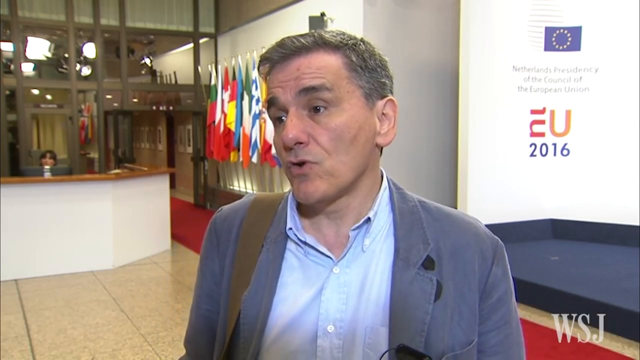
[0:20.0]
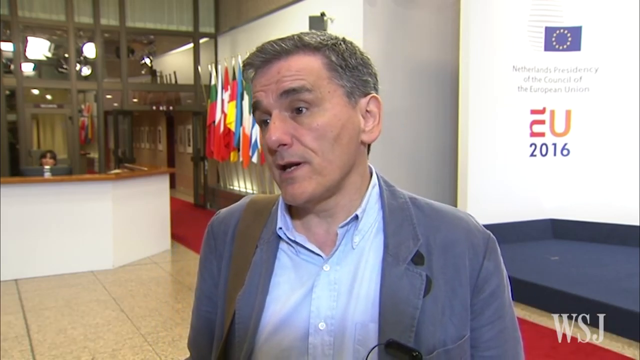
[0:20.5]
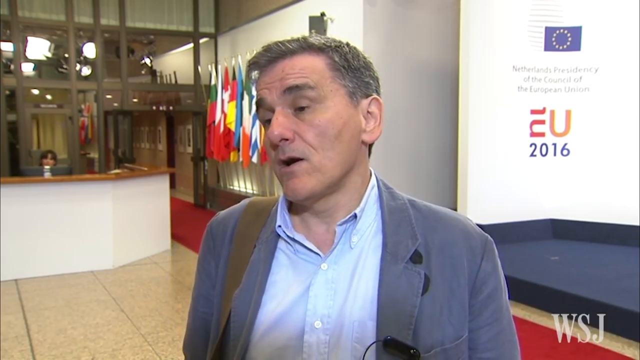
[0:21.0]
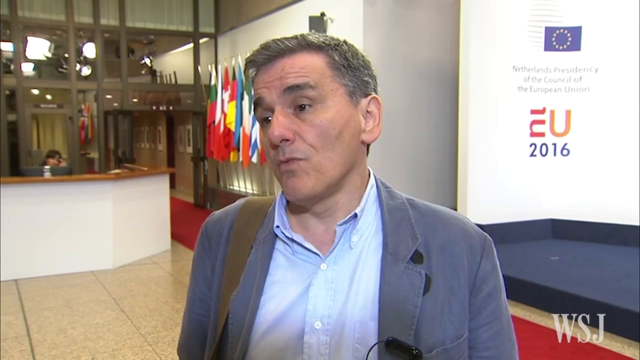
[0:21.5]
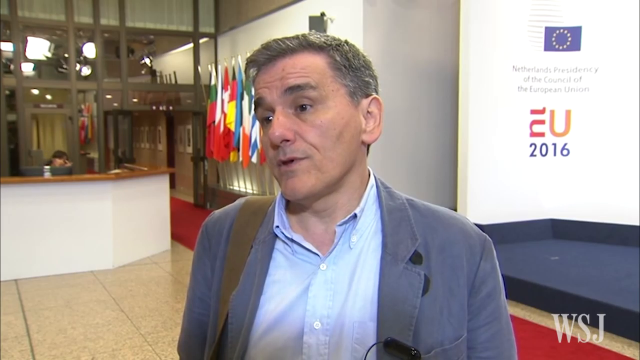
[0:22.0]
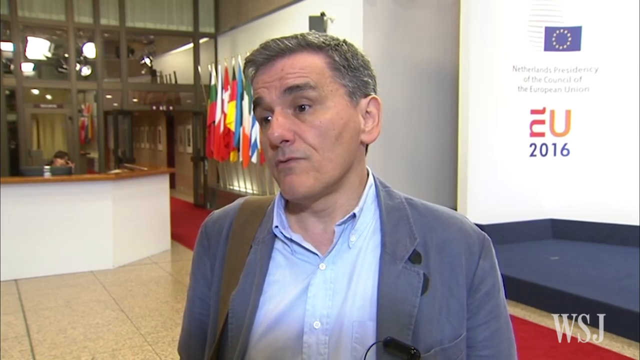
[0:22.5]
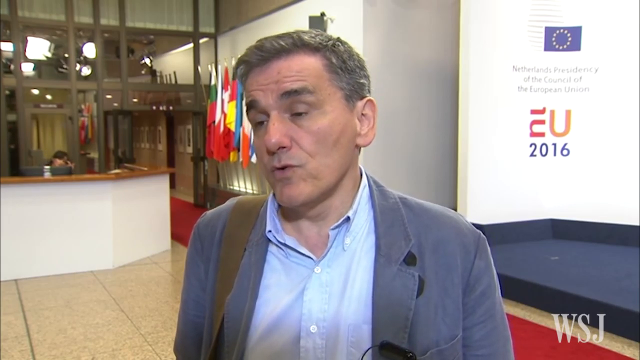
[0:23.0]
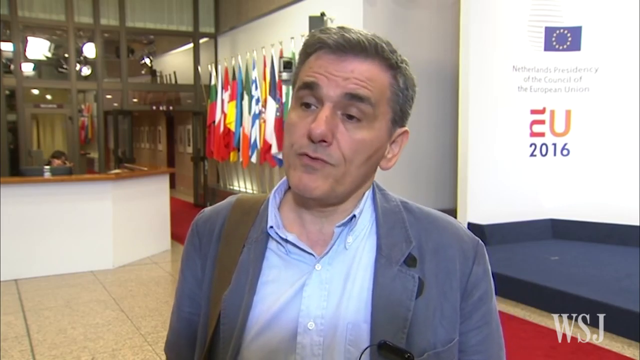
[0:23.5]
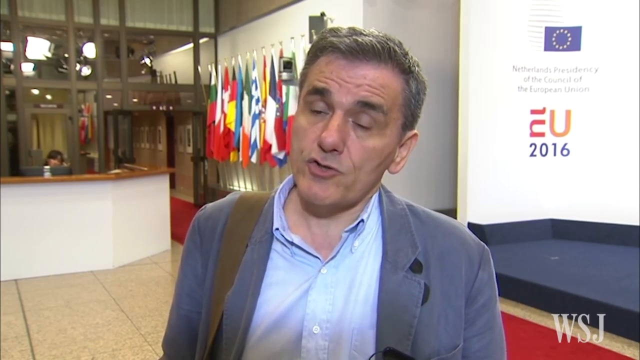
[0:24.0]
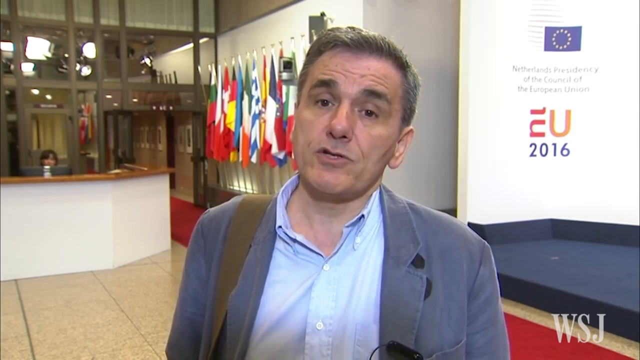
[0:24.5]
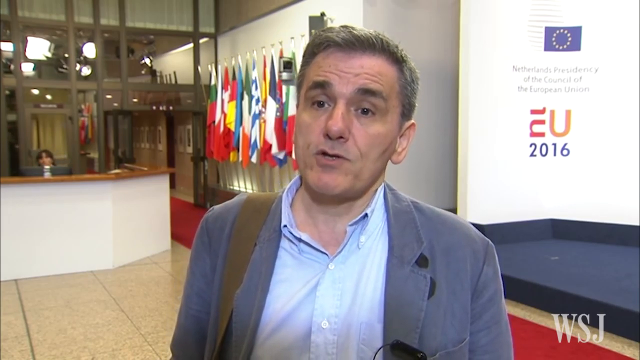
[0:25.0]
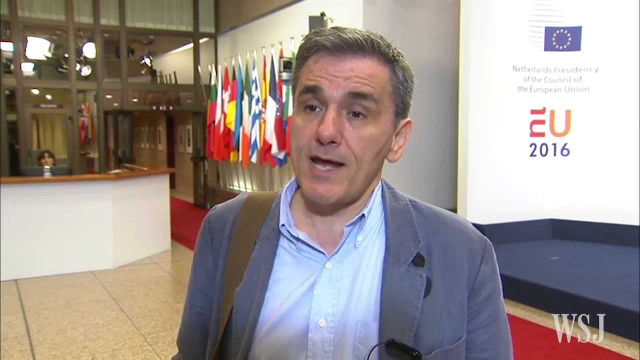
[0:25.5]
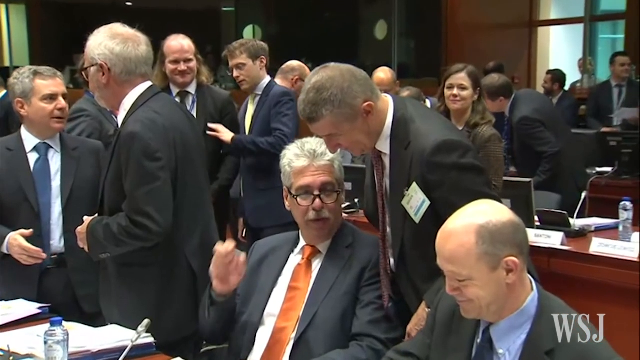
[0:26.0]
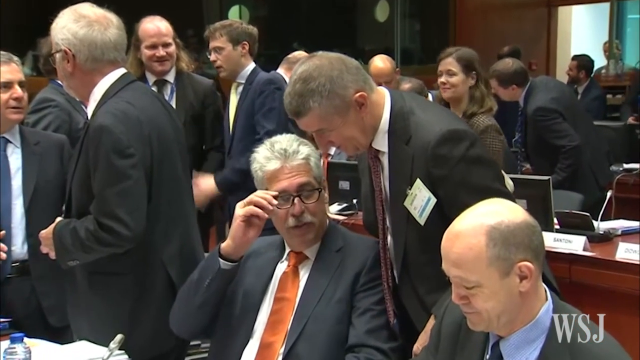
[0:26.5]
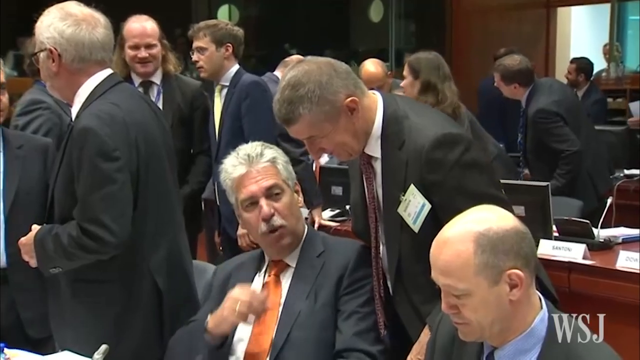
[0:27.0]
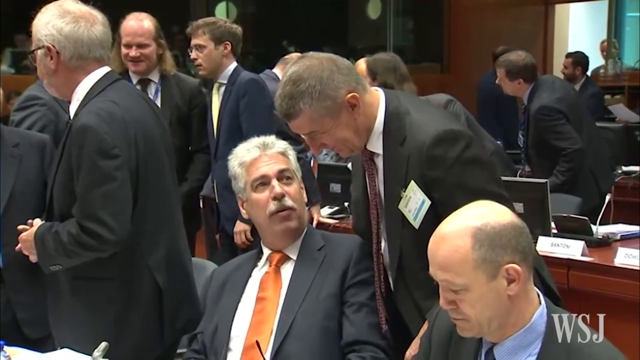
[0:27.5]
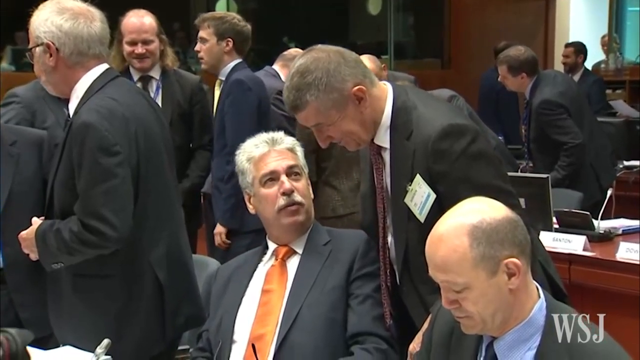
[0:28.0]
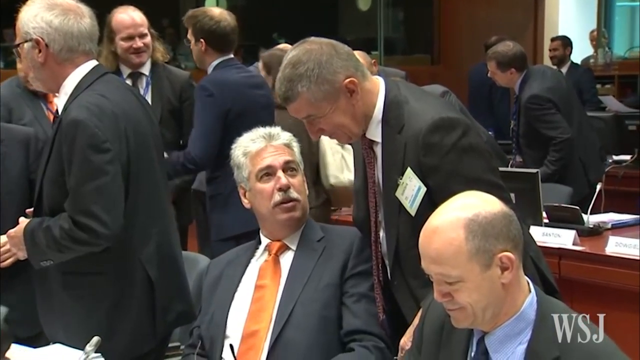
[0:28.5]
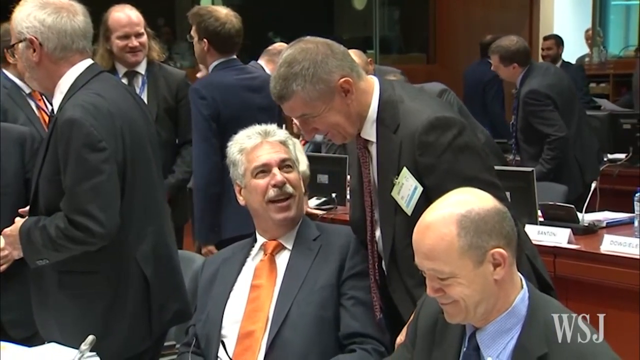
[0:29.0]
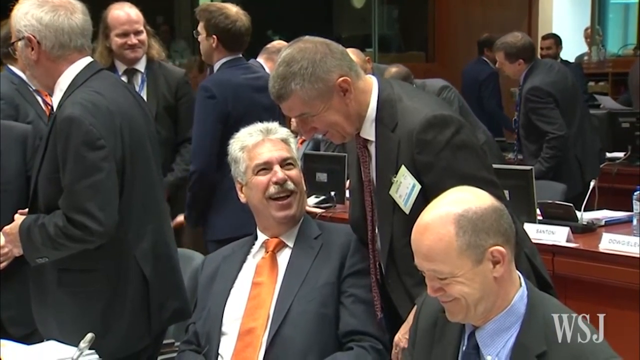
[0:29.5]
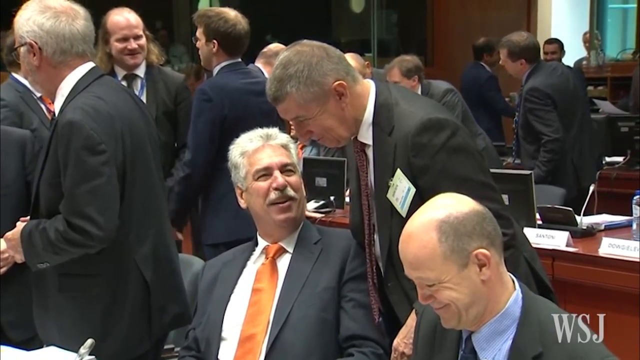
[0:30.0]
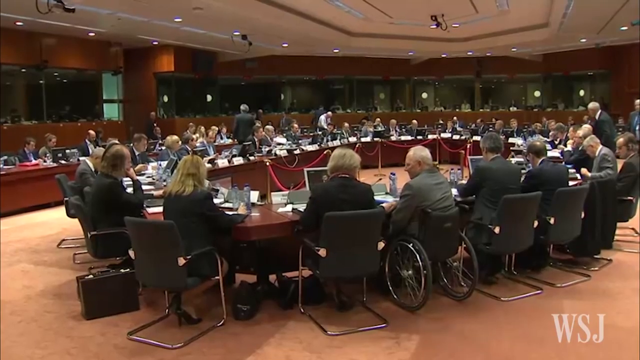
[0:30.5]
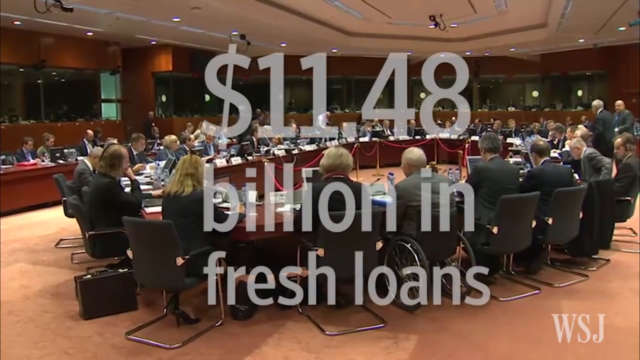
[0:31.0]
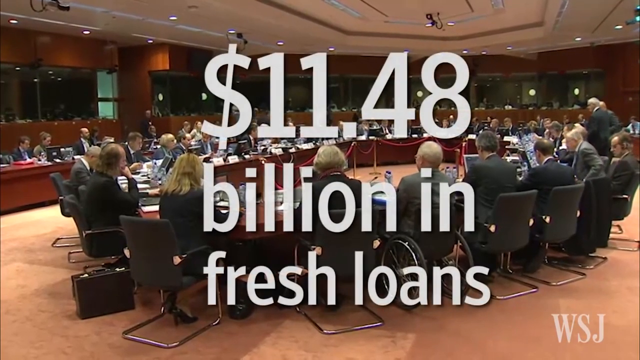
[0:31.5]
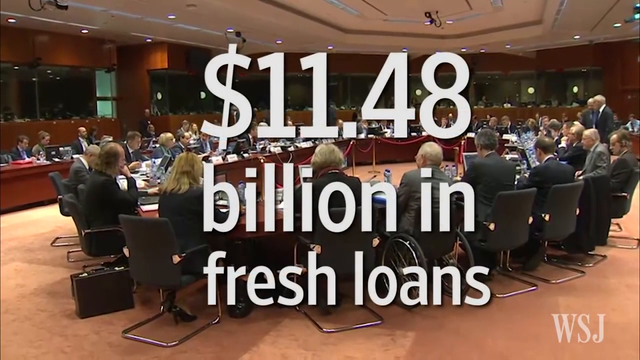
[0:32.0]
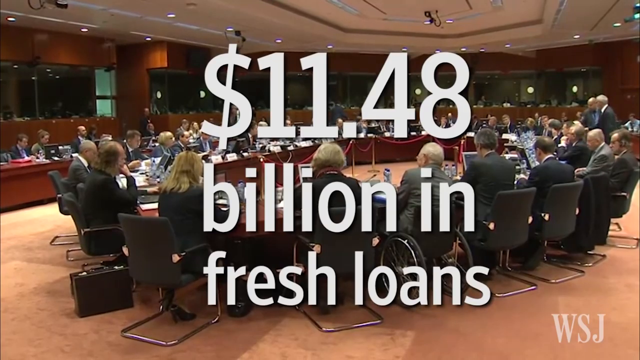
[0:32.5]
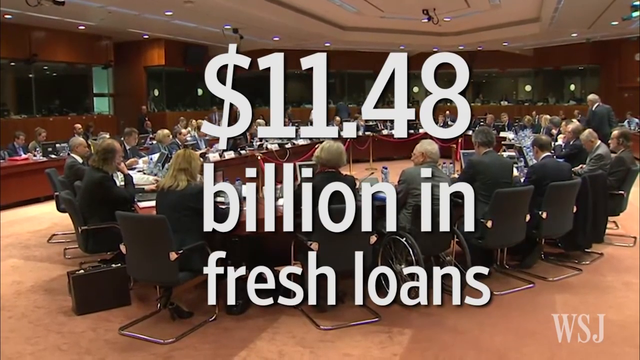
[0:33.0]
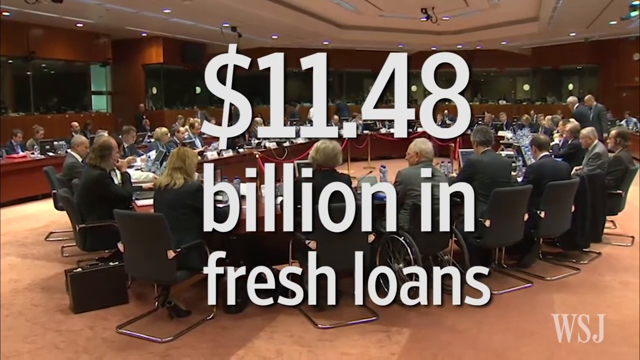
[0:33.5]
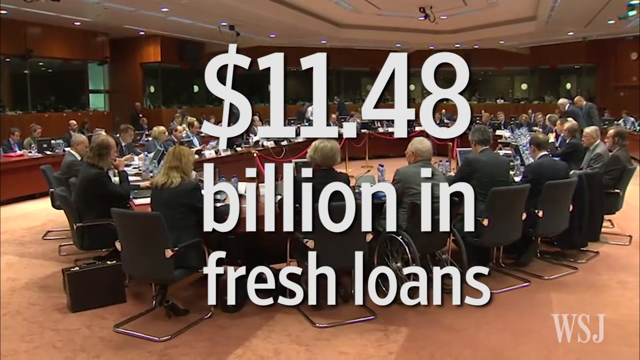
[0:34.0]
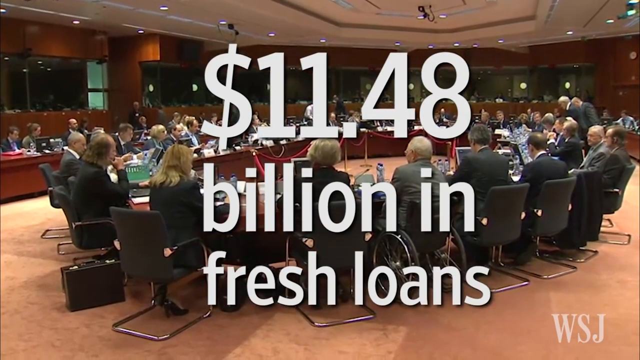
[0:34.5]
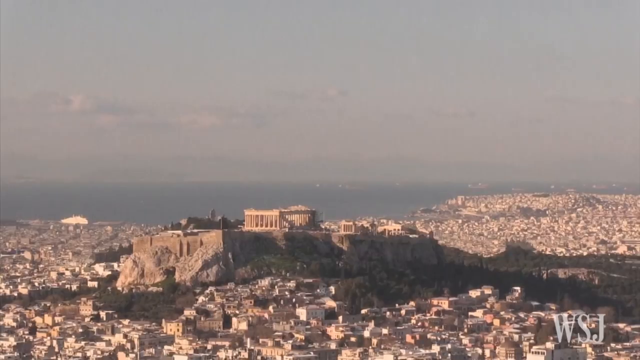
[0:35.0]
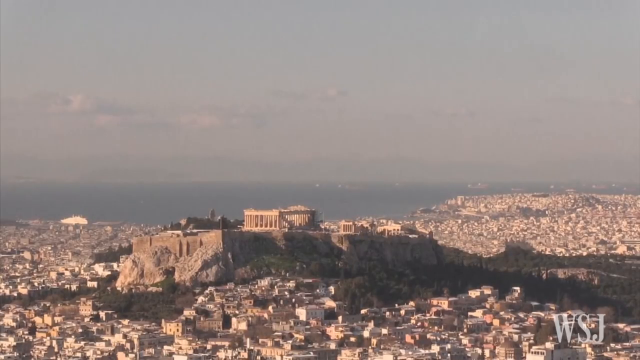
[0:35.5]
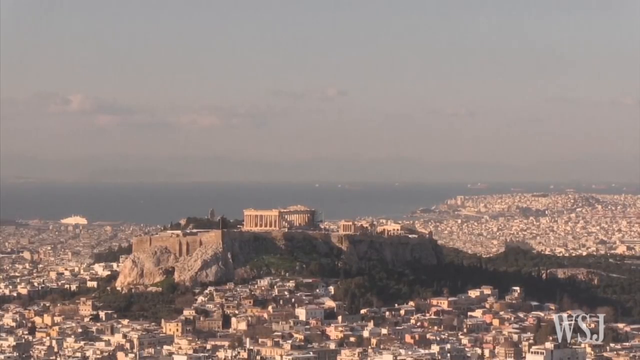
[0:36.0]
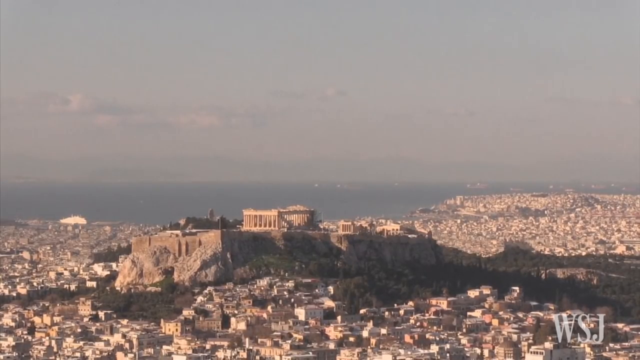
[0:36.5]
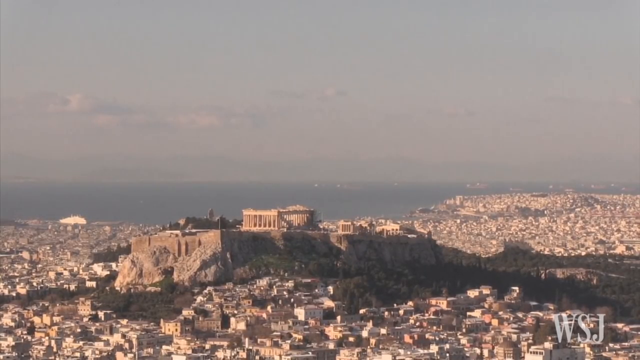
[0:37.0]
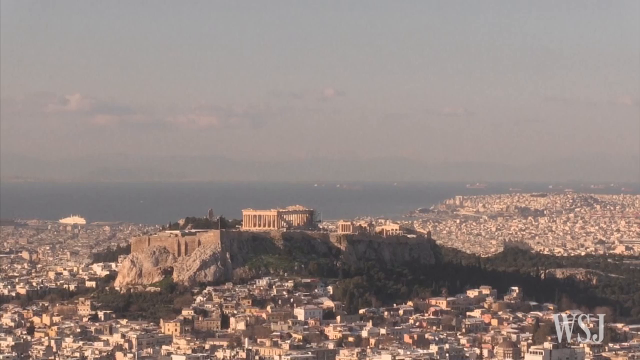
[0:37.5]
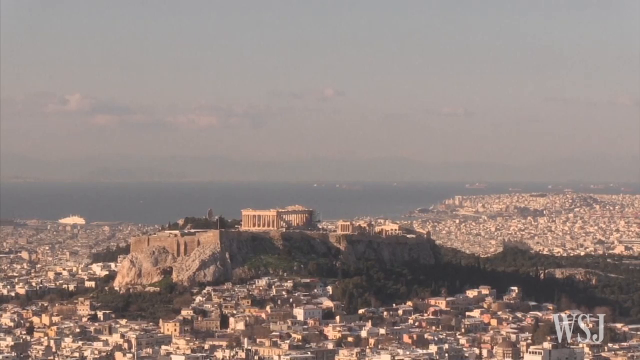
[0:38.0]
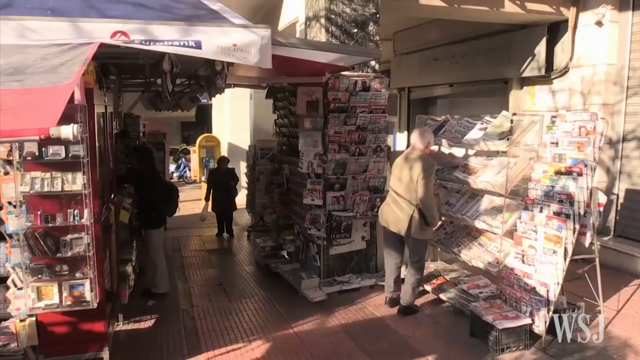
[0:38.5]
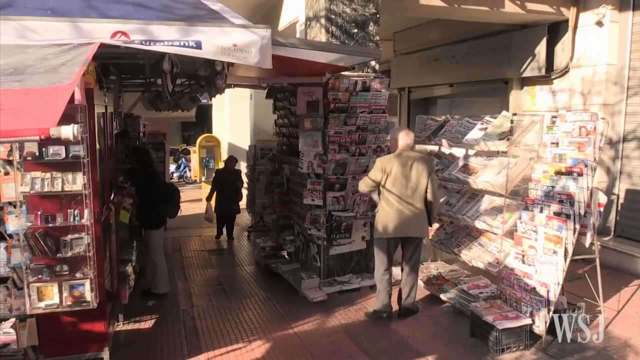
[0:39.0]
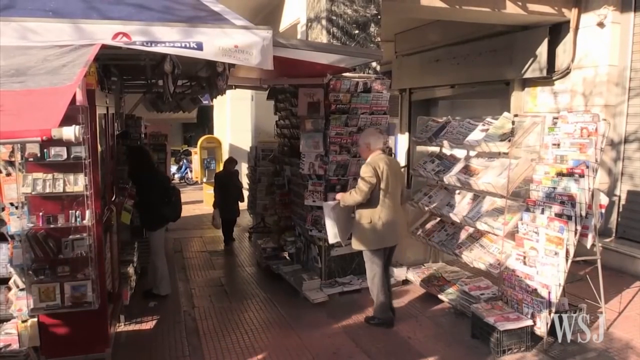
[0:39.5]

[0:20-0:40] A man in a blue jacket and a light blue shirt has a sort of bag on his shoulder with a green band. He has short, rather neat gray hair and speaks while looking slightly to the left. In the background there is a white and brown desk, a rather narrow red carpet on the floor, and flags next to a white wall. The next shot shows men in jackets and elegant outfits inside a room with brown tables. Another, rather wide shot shows people sitting on black chairs around a very large table in a room, and white text appears superimposed over the central part of the screen. Then an aerial shot shows a city with a temple on top of a relief. A building follows, with various people moving around the exhibitors with newspapers.